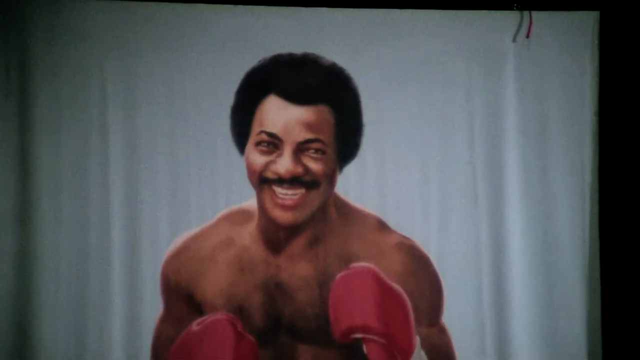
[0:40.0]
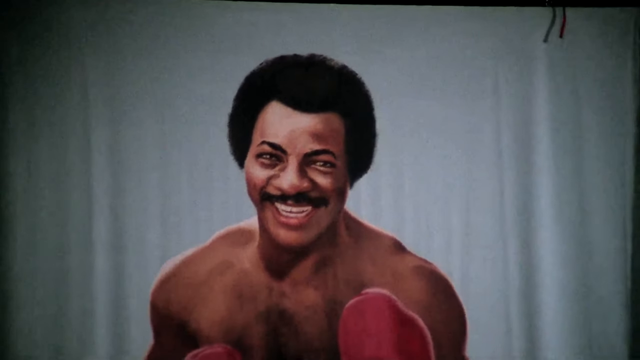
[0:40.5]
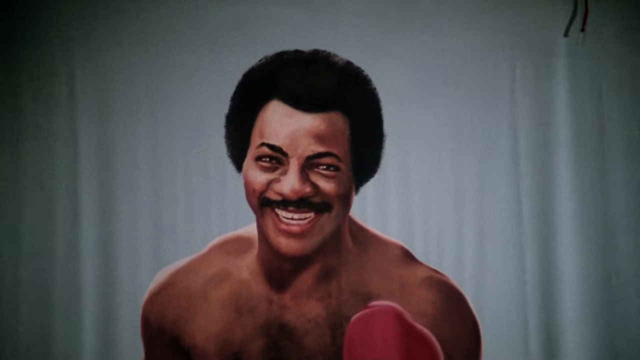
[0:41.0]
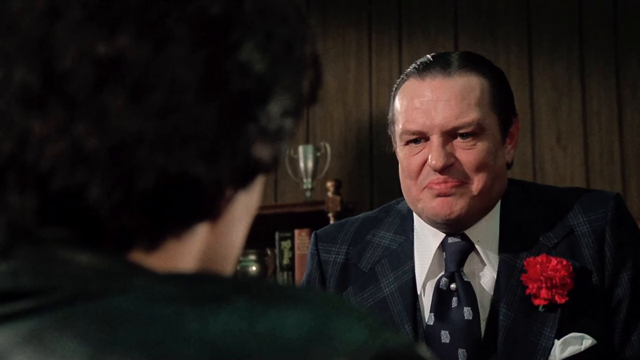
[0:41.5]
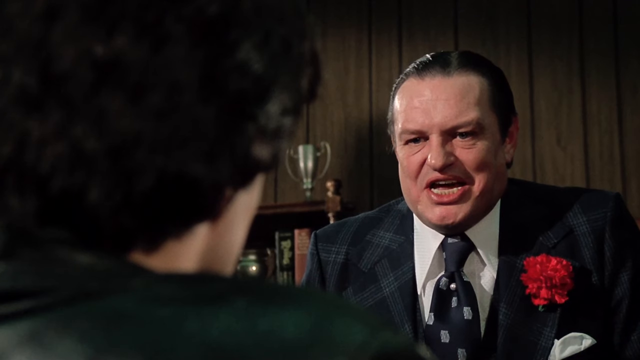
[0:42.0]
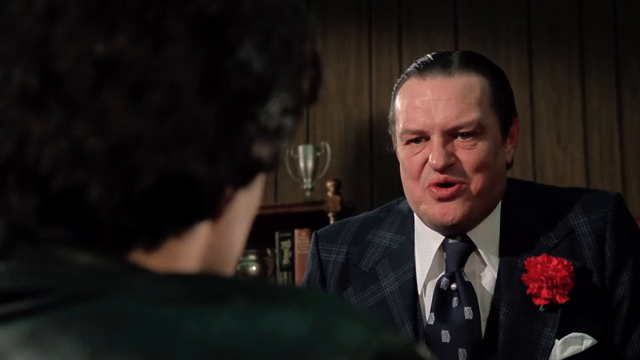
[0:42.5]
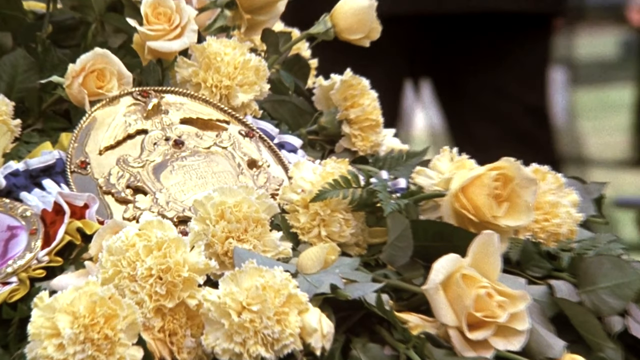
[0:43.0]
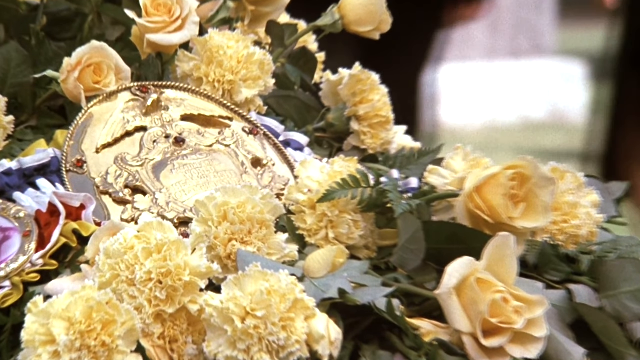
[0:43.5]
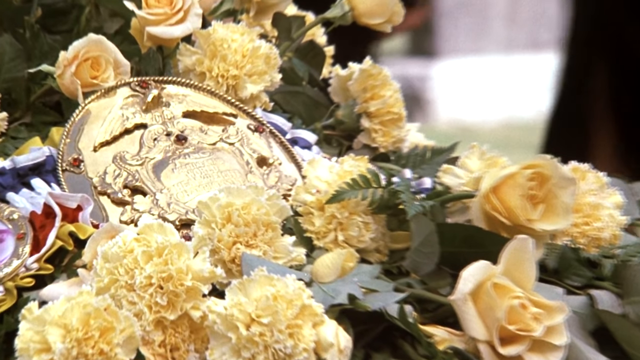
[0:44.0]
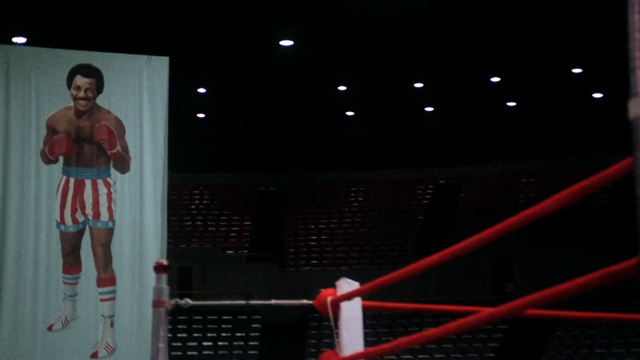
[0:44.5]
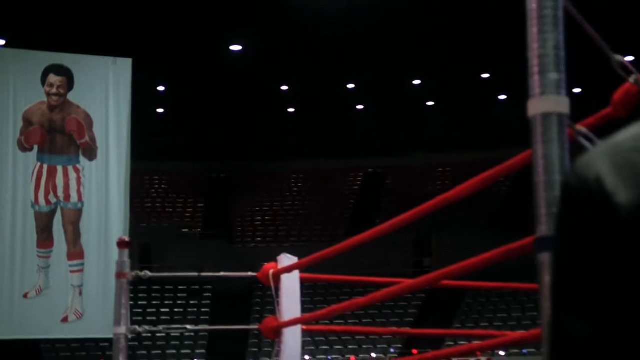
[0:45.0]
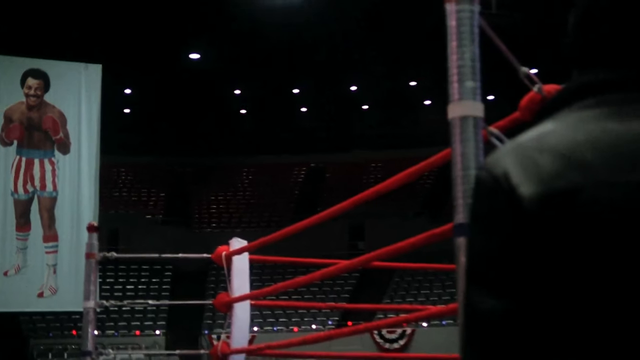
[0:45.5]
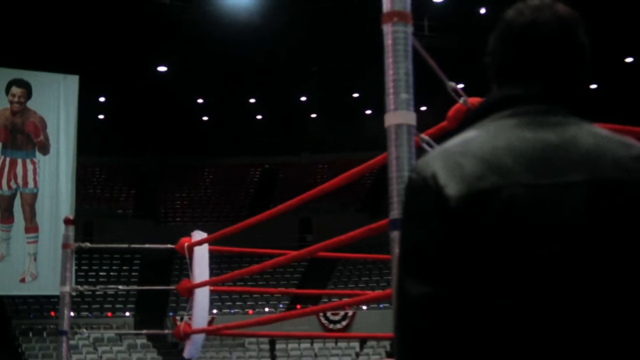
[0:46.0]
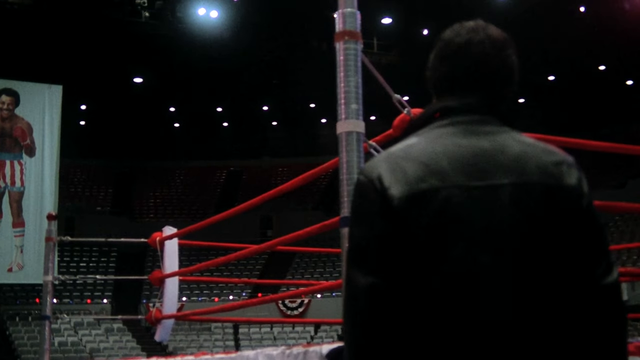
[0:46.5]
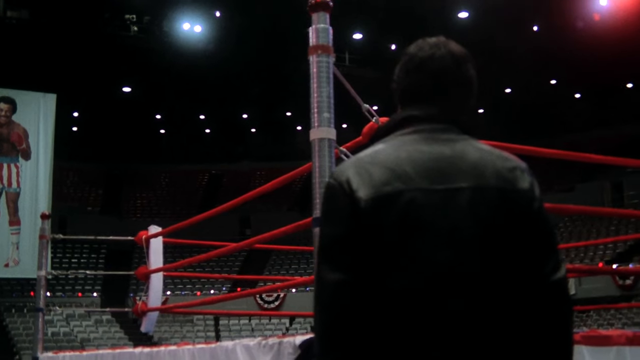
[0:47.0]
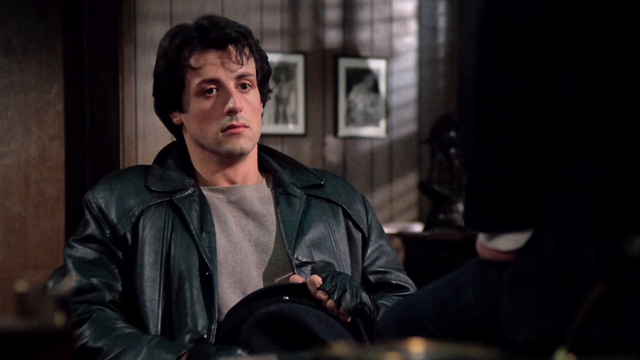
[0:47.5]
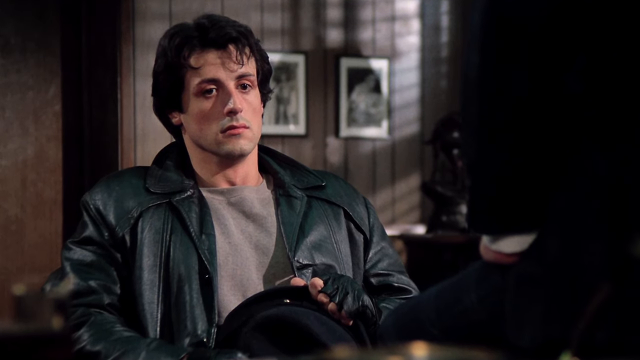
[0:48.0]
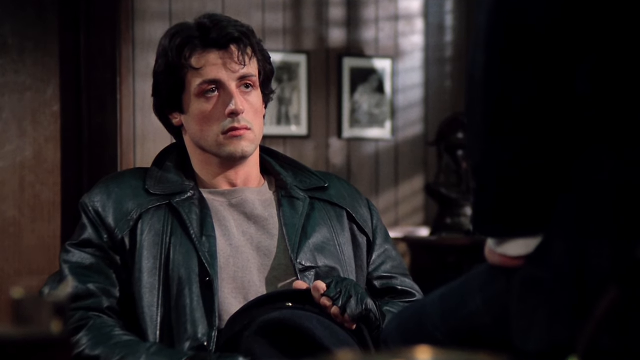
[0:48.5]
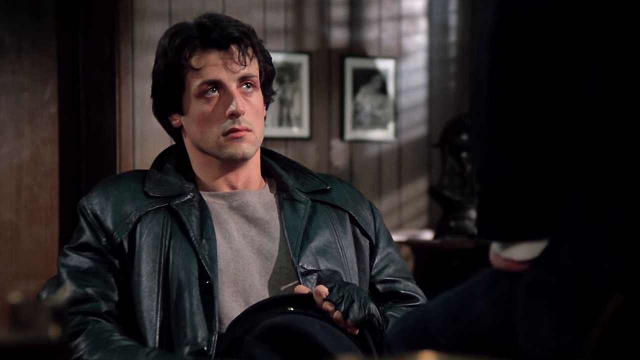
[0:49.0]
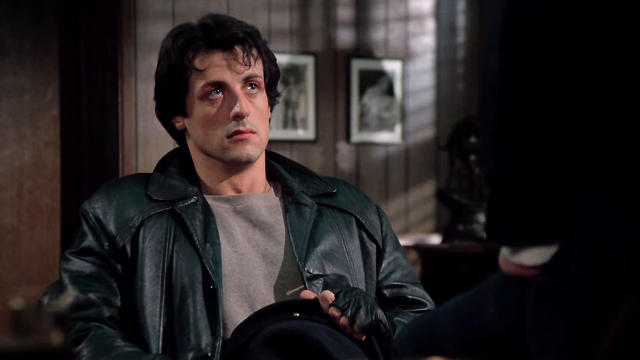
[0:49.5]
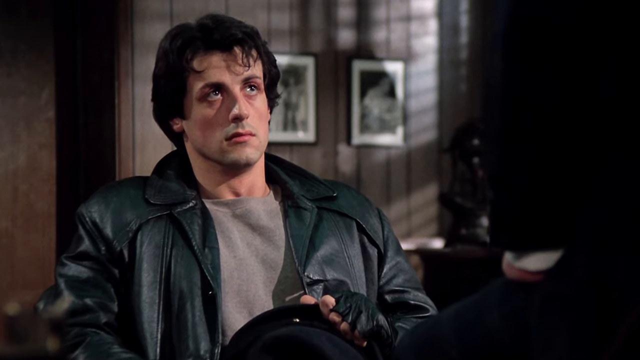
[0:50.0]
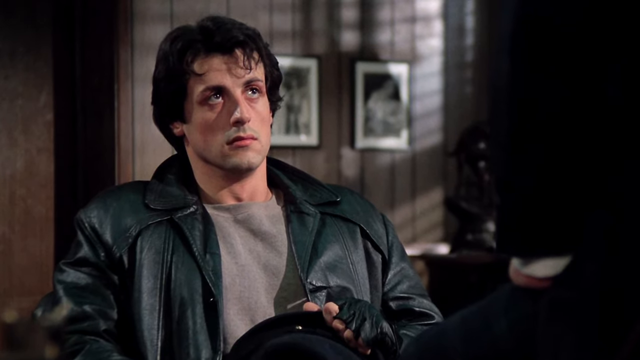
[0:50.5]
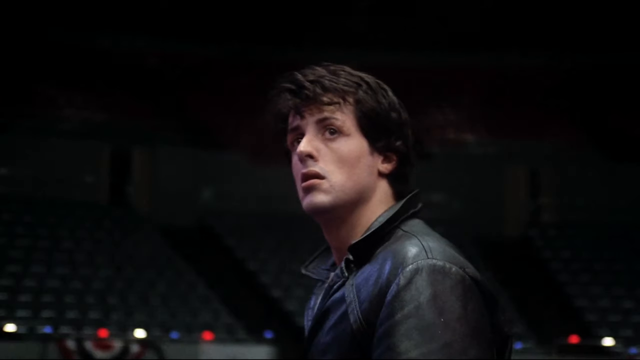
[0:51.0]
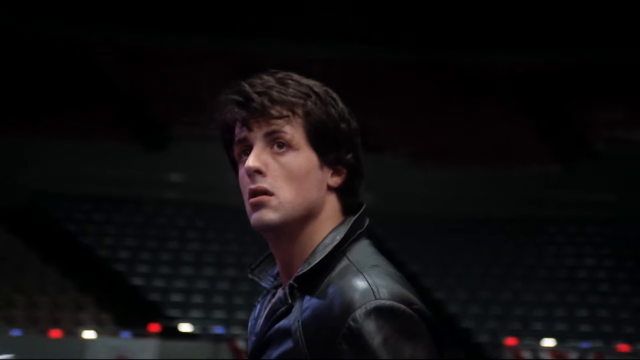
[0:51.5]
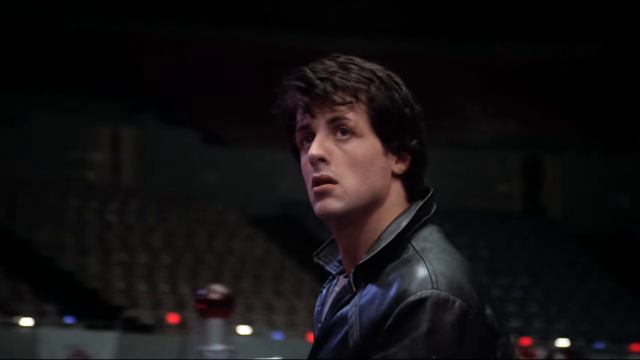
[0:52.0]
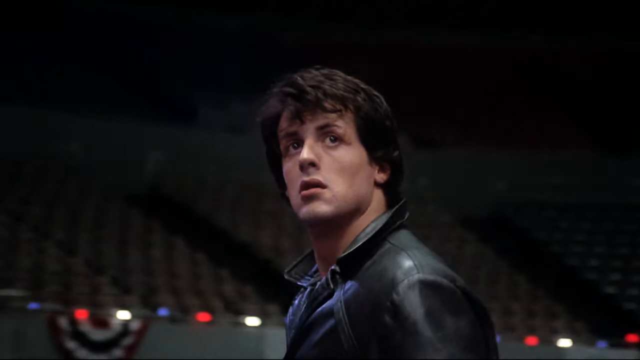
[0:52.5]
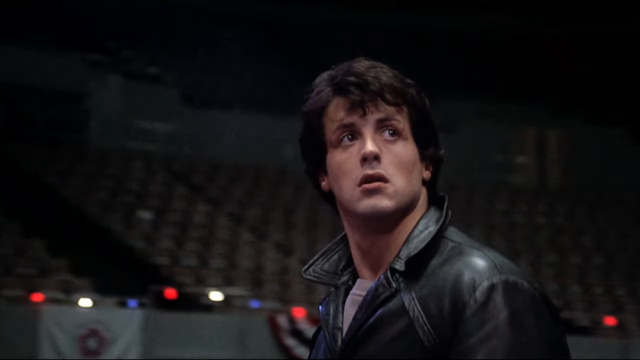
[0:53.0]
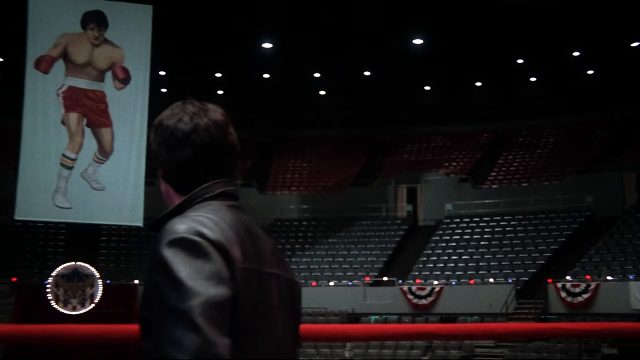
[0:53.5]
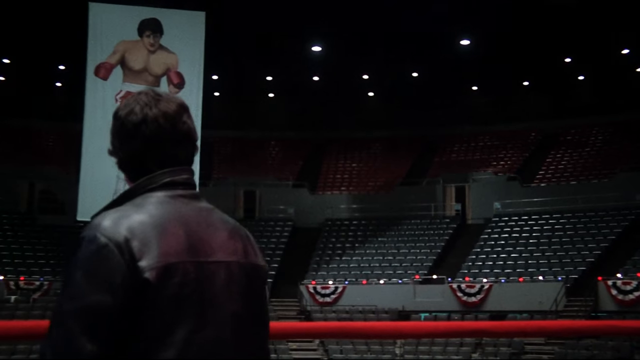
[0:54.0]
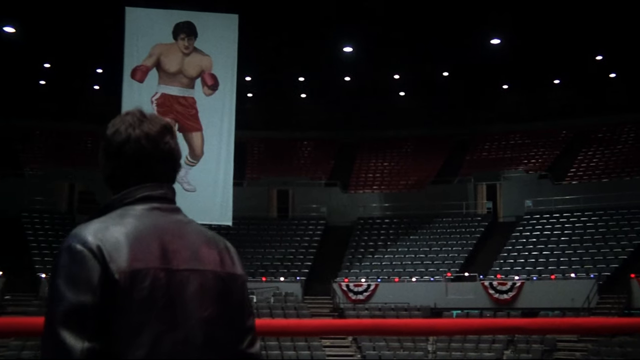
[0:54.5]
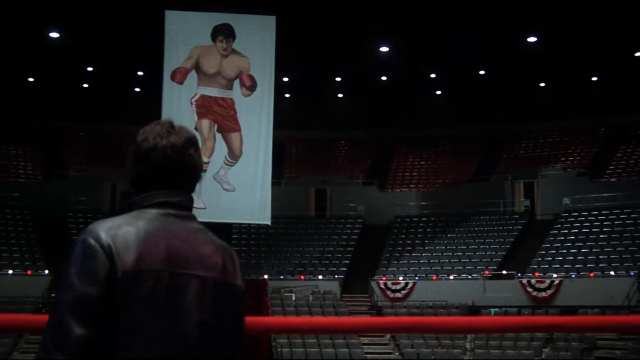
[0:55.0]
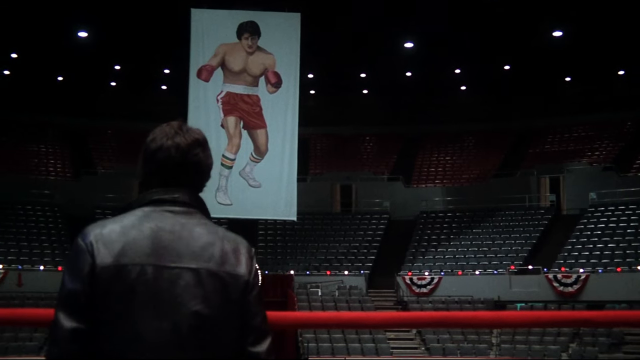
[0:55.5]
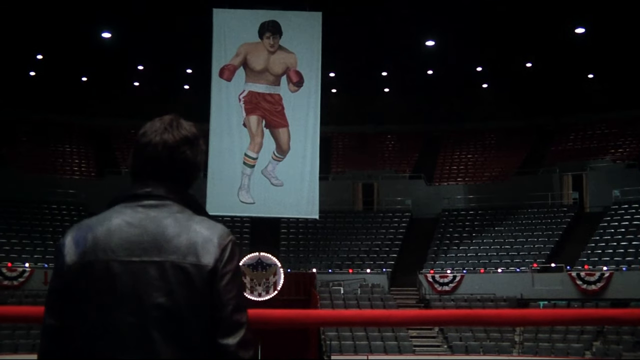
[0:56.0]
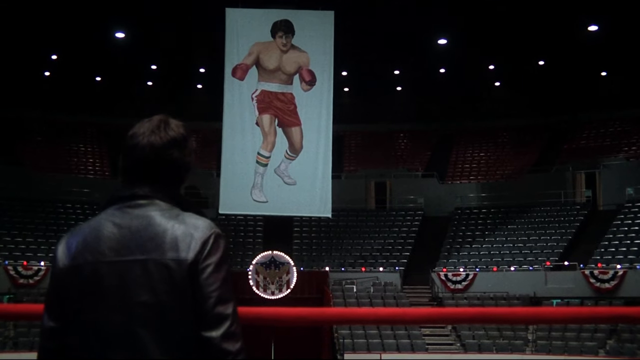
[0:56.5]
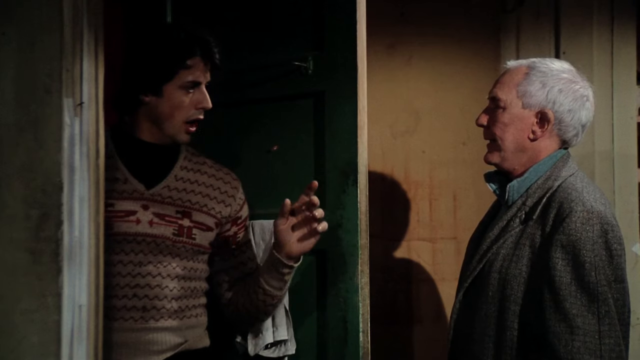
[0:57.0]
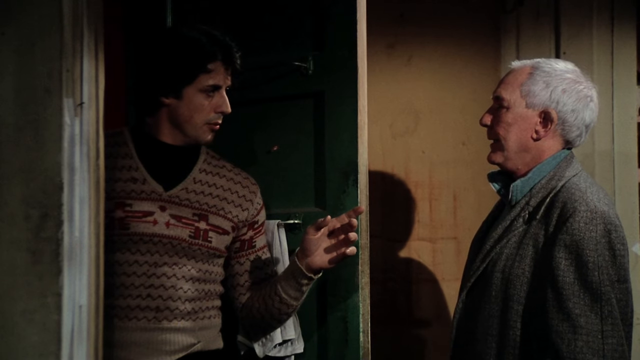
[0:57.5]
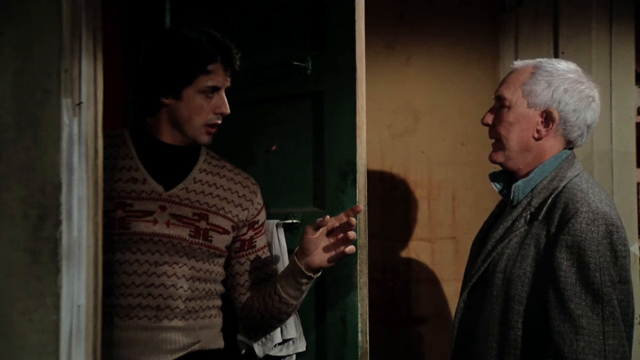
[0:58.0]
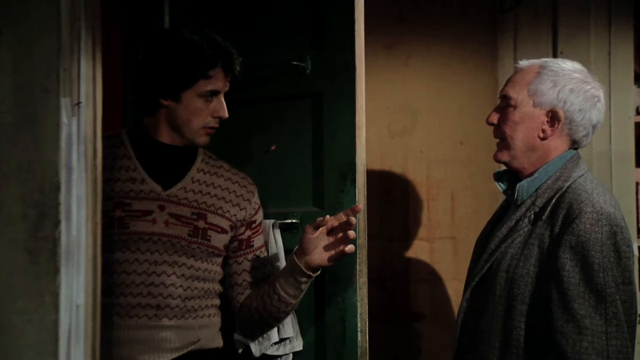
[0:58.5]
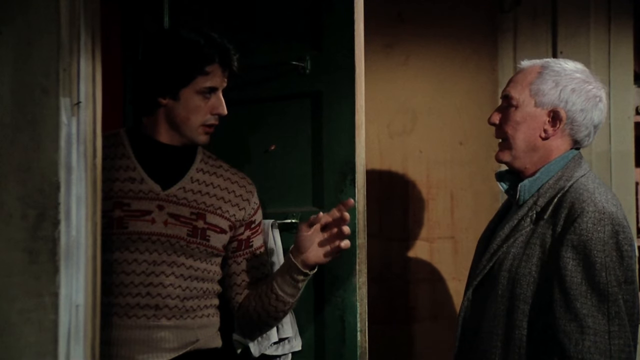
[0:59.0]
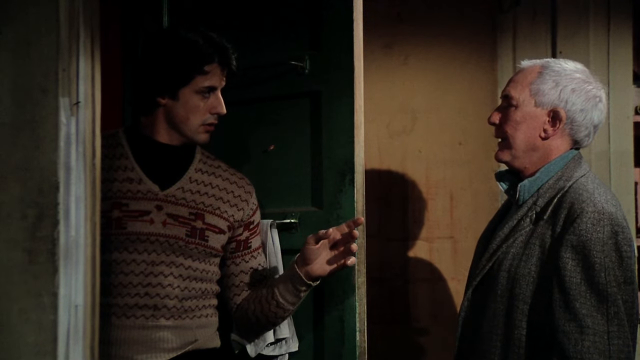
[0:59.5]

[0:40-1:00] A picture of a black fighter appears, zooming in on his smile and posture; he wears a striped shirt. The focus returns to the man in the black jacket seen earlier, walking in a boxing ring. He looks up at the picture, maybe admiring it. An aged man in a black suit appears, and the two confront each other and talk. A picture of yellow flowers is shown, zooming in. The focus then returns to the white man with black hair, walking around and looking at the picture of the black boxer, which zooms in. The setting is a boxing ring with red ropes around it.